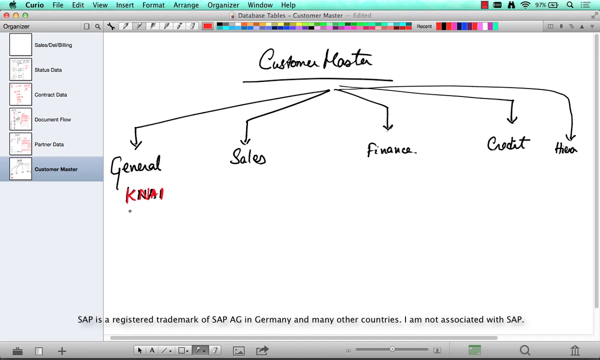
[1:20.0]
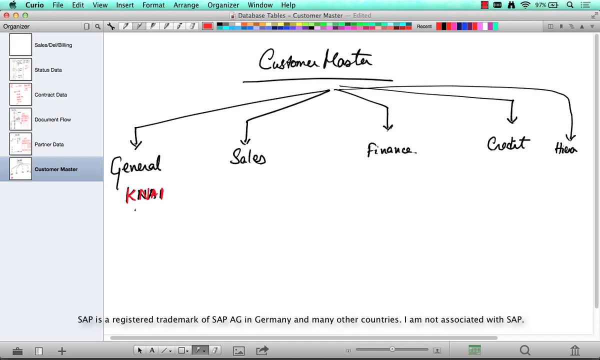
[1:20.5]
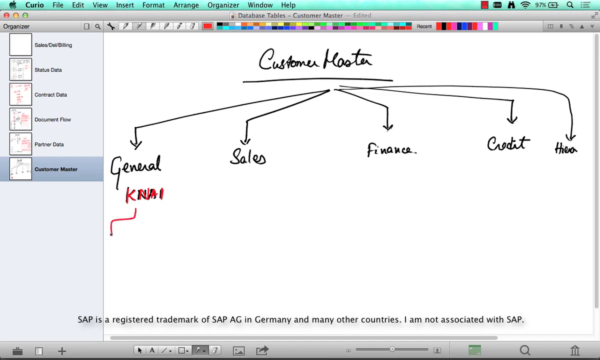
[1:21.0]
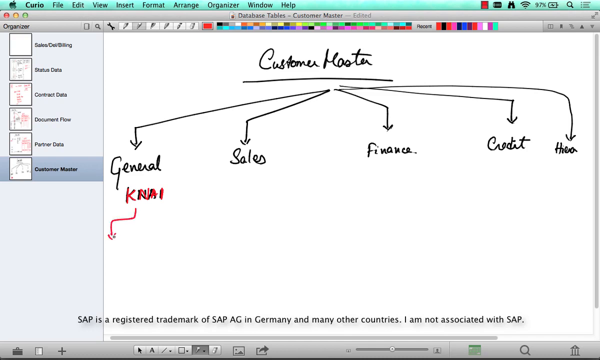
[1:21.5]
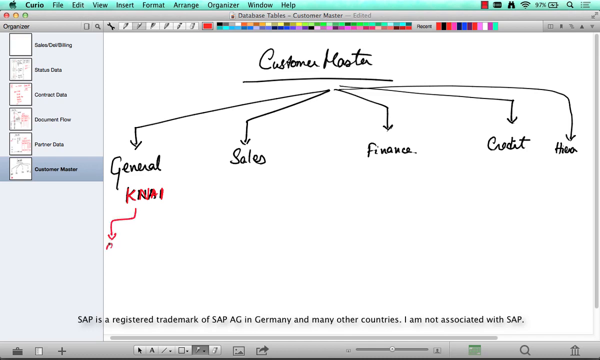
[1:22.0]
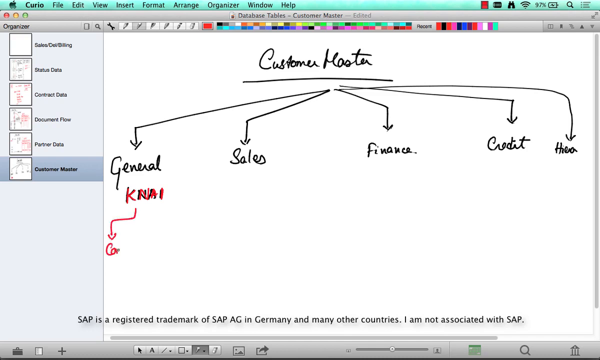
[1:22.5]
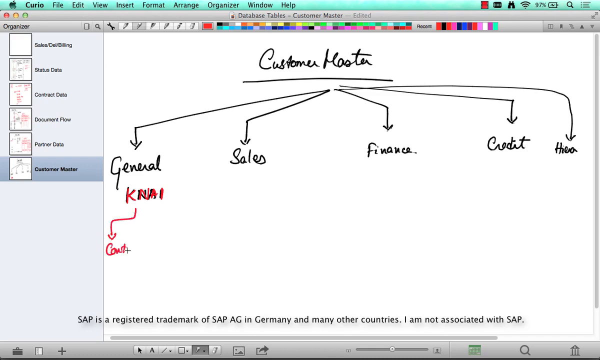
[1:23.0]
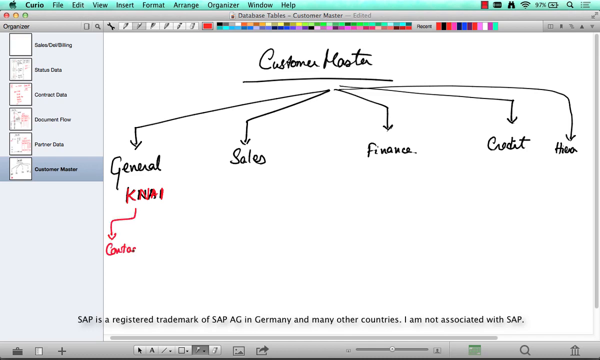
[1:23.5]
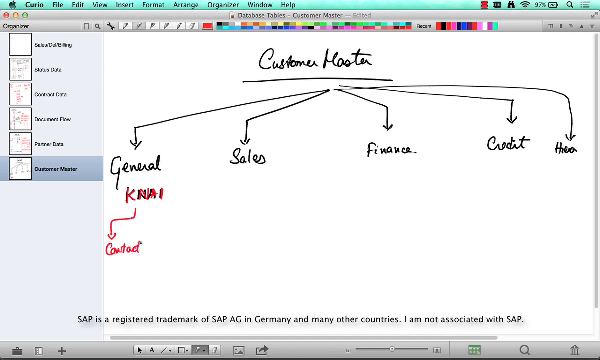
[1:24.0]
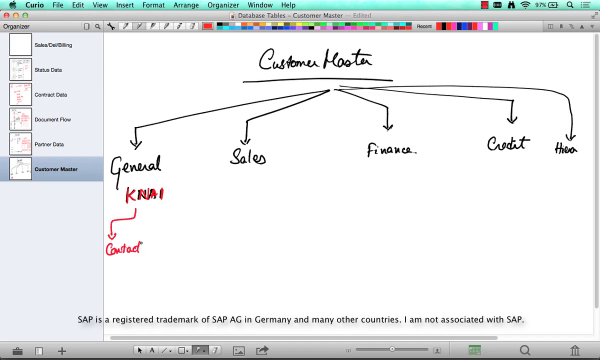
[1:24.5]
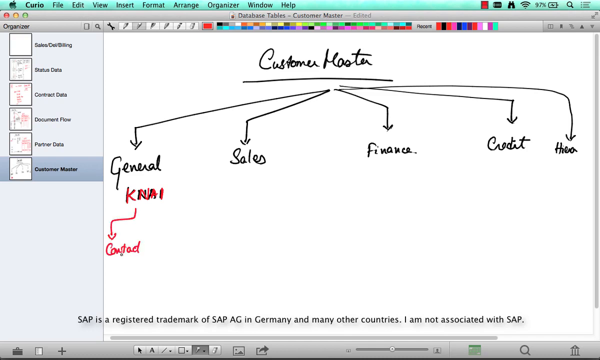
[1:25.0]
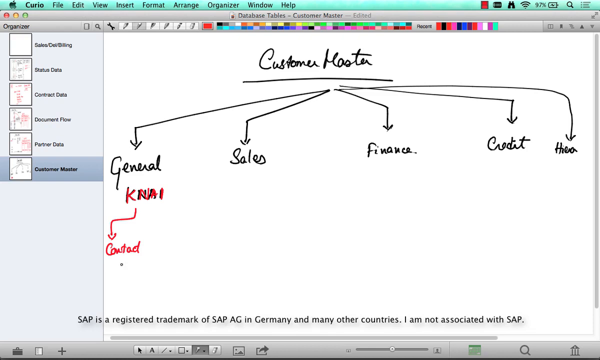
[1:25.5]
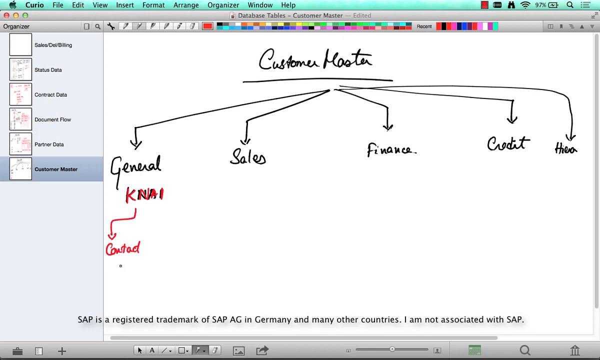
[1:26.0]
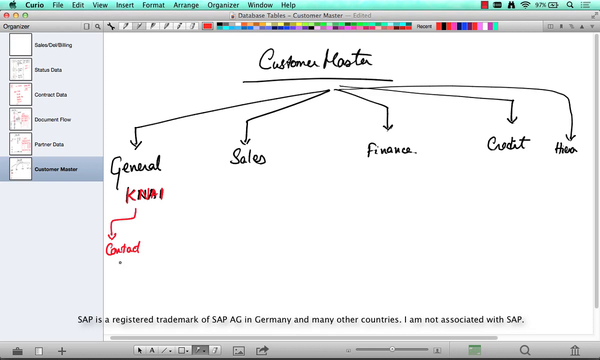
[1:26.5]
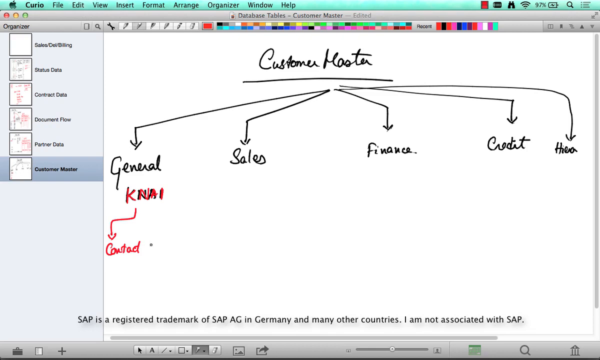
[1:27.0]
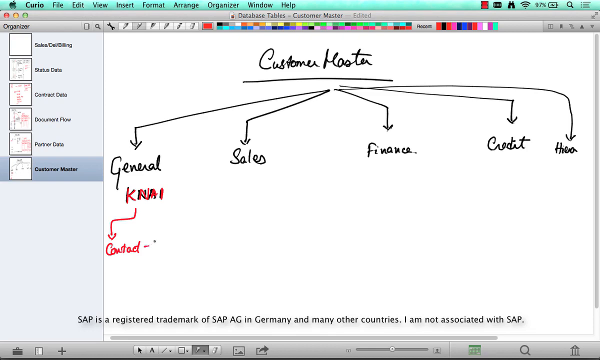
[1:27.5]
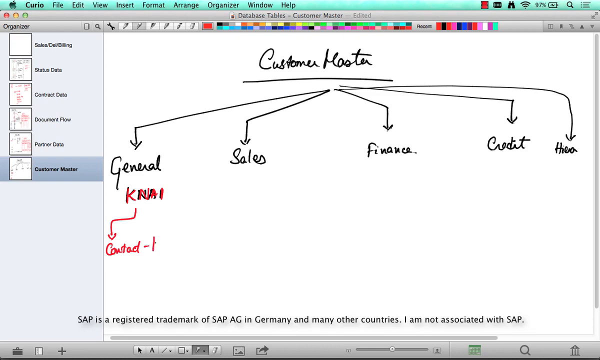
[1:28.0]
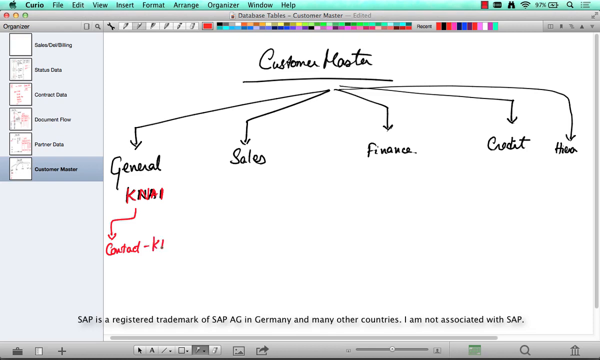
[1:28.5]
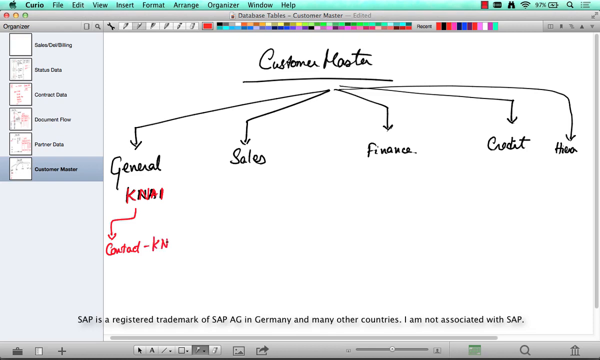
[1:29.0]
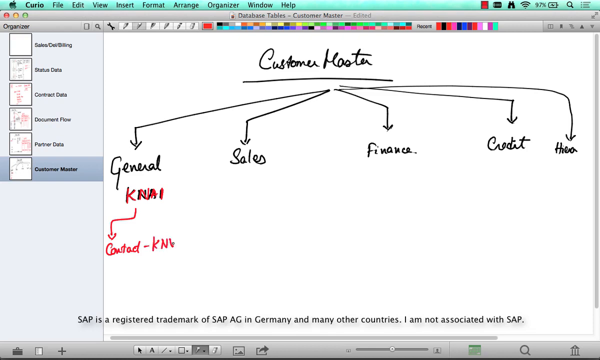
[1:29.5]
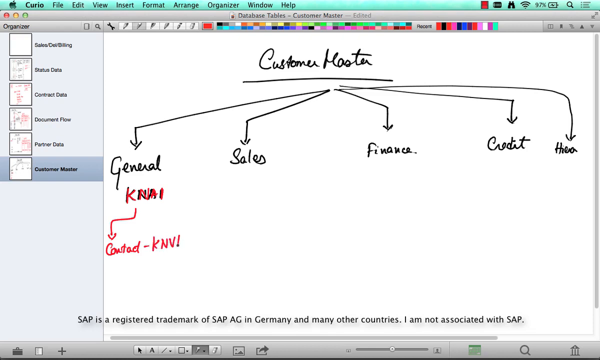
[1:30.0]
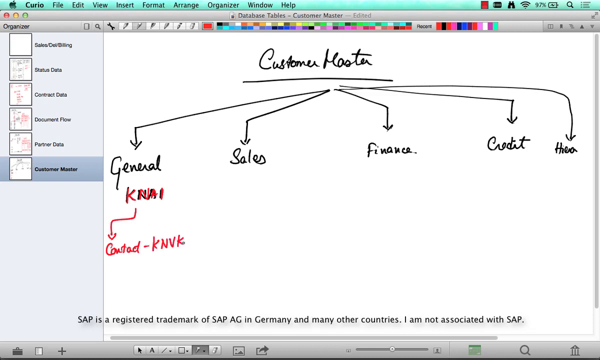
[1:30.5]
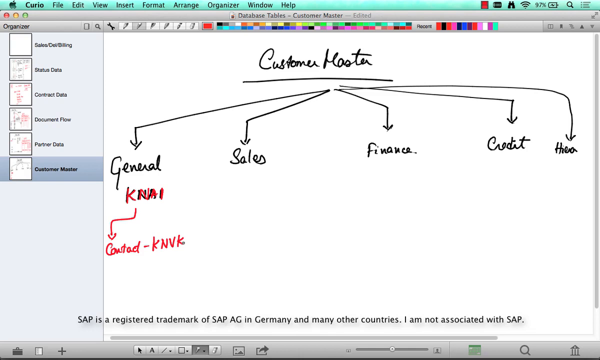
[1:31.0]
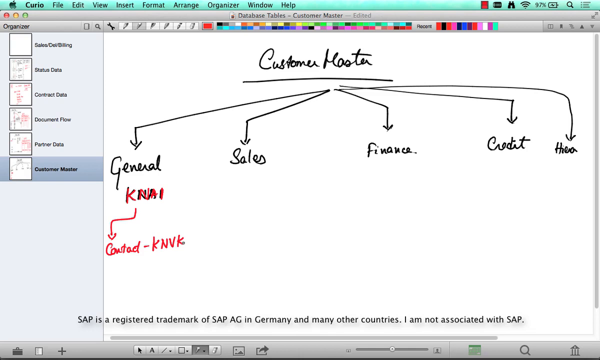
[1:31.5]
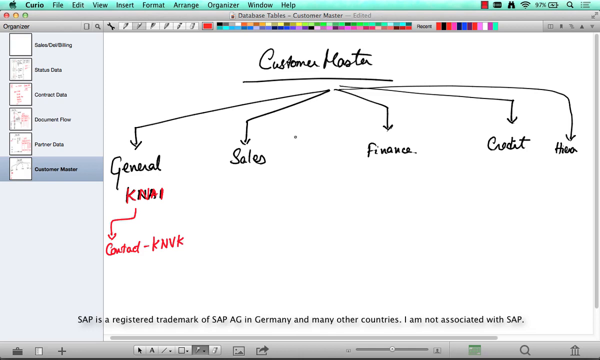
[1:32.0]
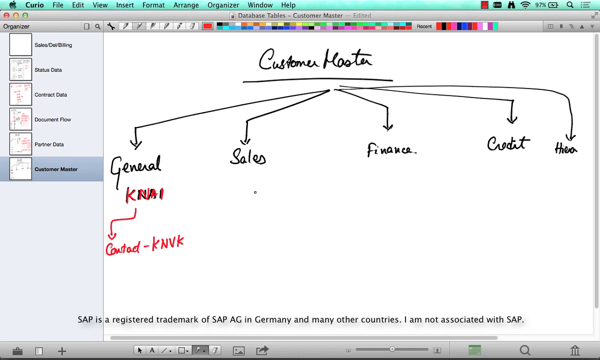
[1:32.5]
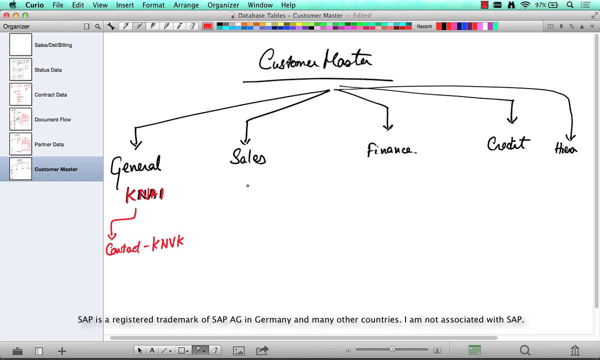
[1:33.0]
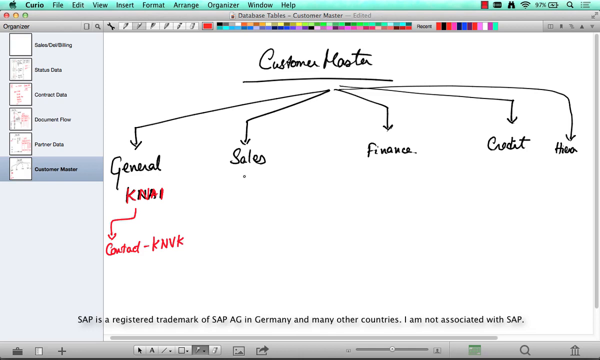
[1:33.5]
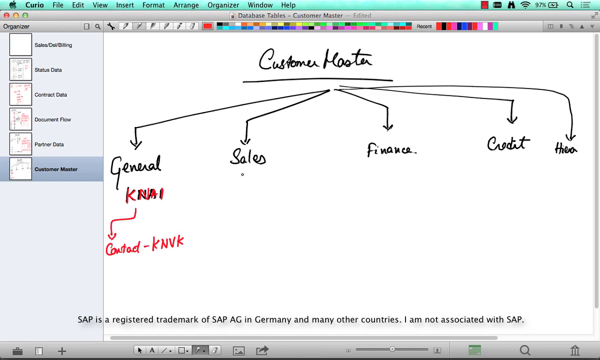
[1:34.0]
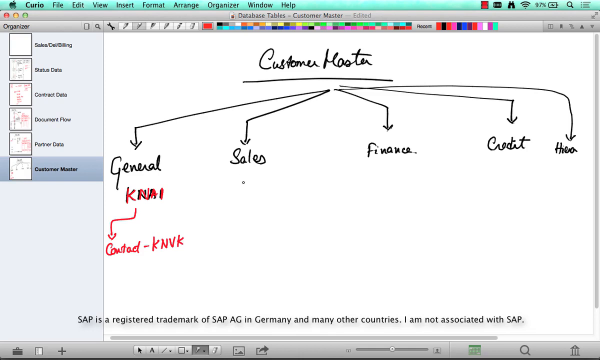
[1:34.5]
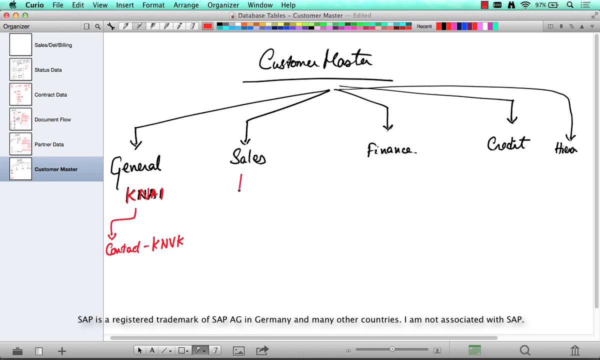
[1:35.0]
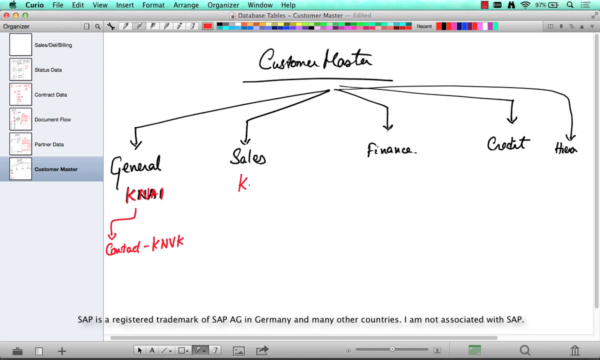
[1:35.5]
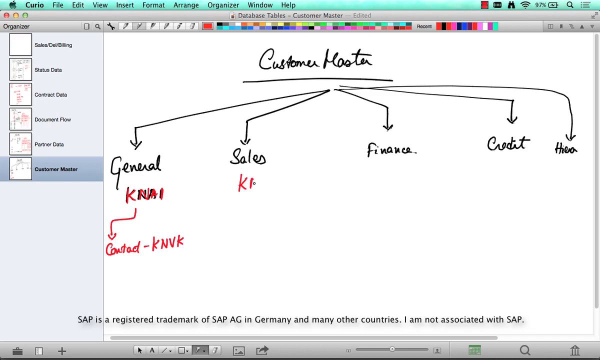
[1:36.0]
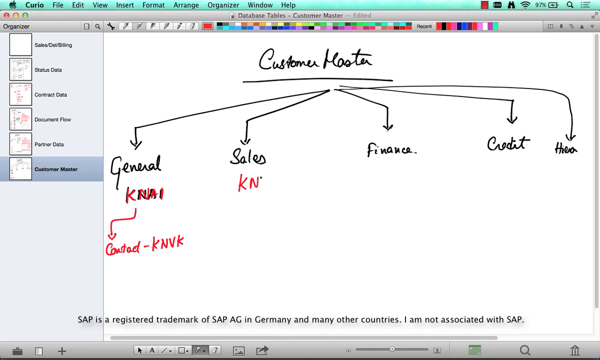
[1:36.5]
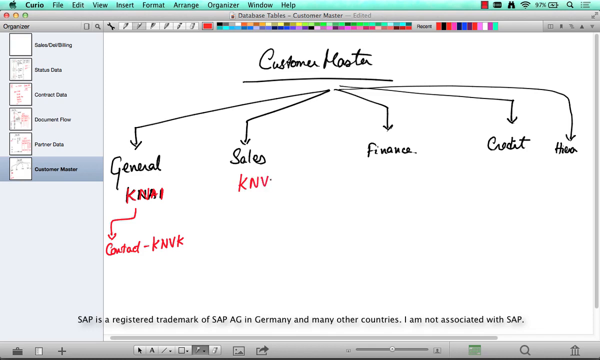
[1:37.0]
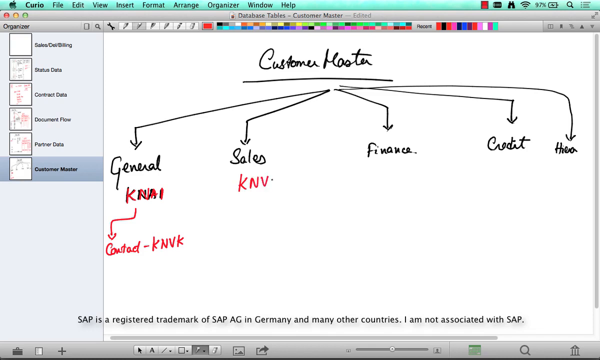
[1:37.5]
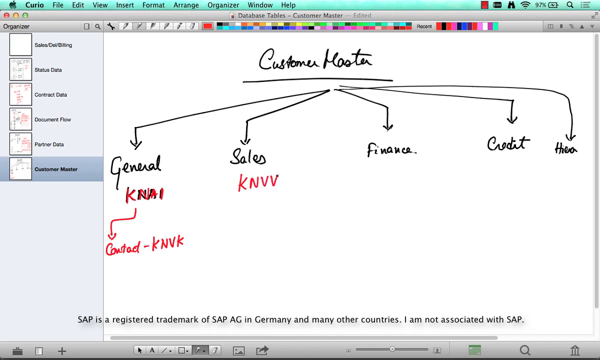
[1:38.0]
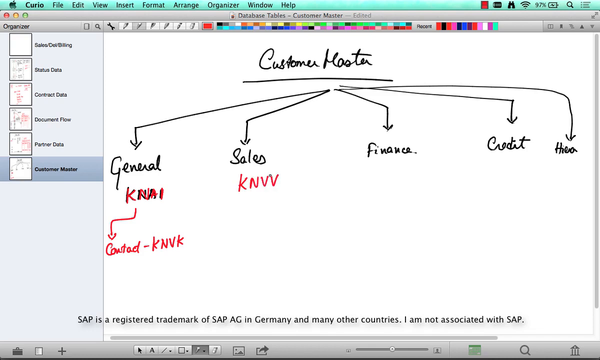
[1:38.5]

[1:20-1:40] Under KNAI, a red arrow is drawn to the left, a squiggly arrow that goes down to the left and then down again. Then "CONTACT" is written in red in semi-cursive, followed by a dash and "KNVK" in all caps. Under sales, "KNVV" is written, and then the view cuts off. On the left side is the navigation panel with several pages; the bottom page, "Customer Master", is open. Above it, somewhat hard to see because of the quality, are other pages apparently labeled sales billing, status data, contact data or contract data, document flow and partner data. All of those other sheets have writing on them except the first one, which seems to be the sales billing page.